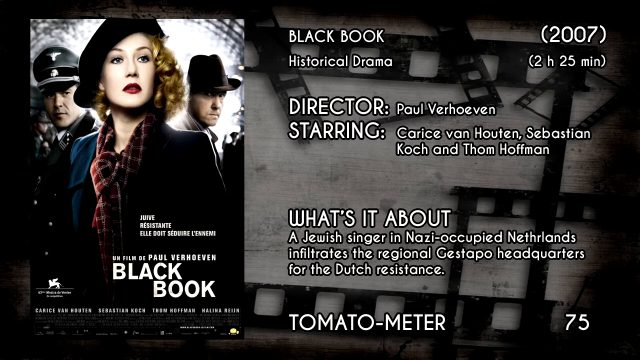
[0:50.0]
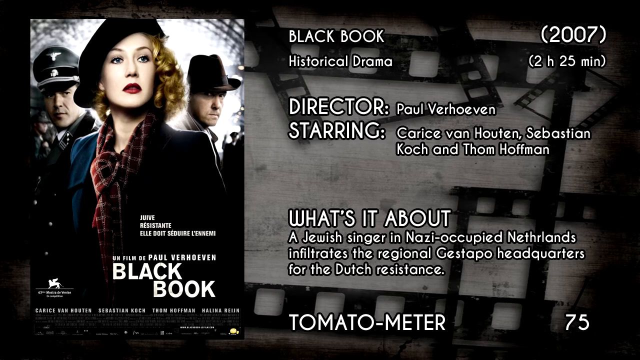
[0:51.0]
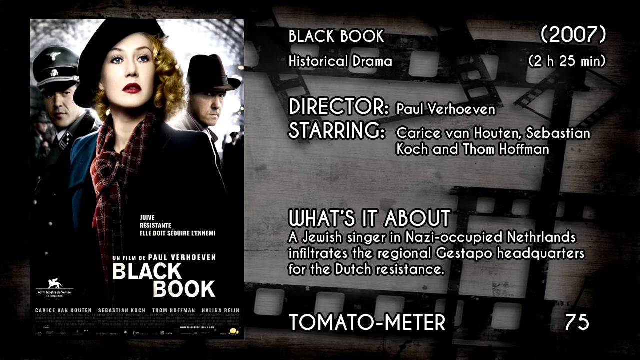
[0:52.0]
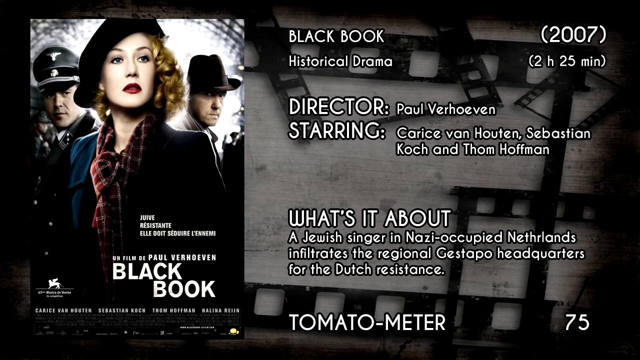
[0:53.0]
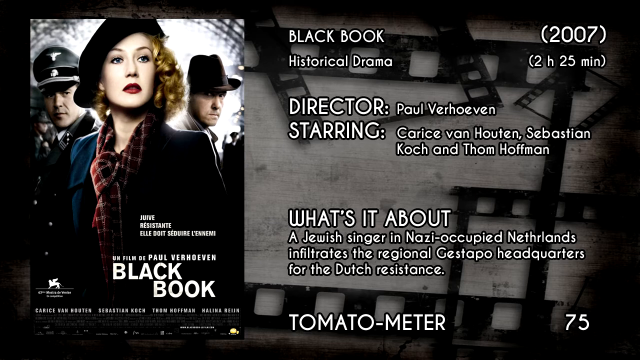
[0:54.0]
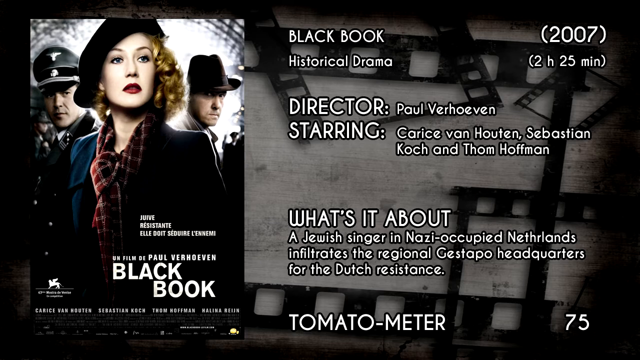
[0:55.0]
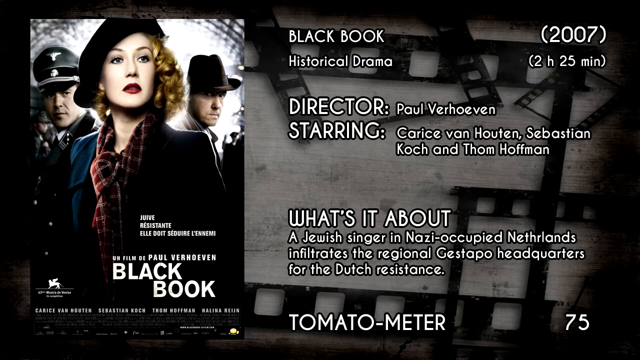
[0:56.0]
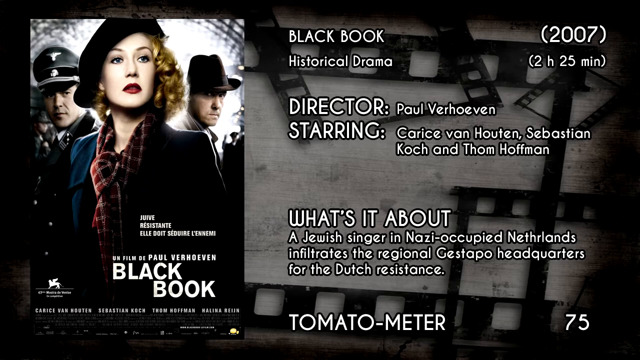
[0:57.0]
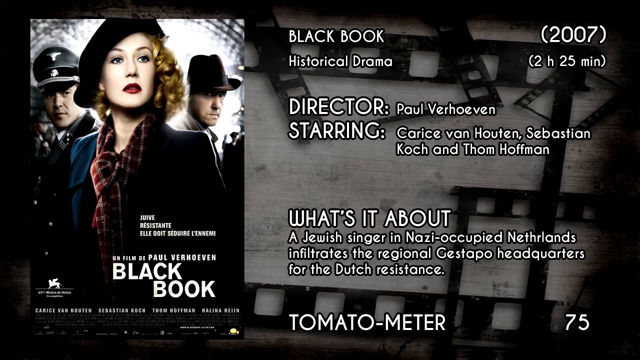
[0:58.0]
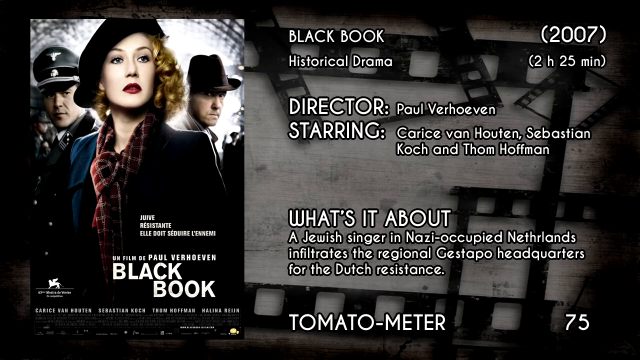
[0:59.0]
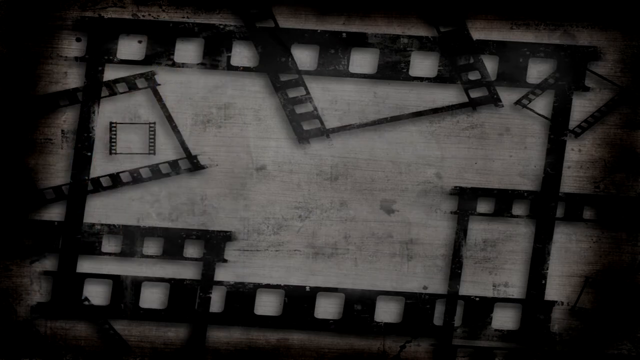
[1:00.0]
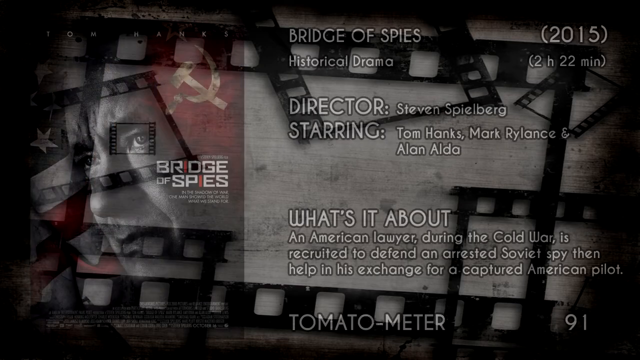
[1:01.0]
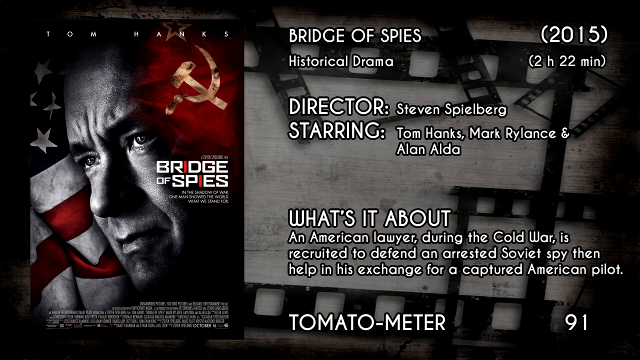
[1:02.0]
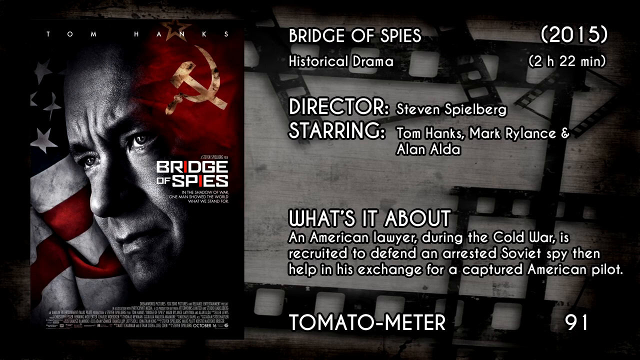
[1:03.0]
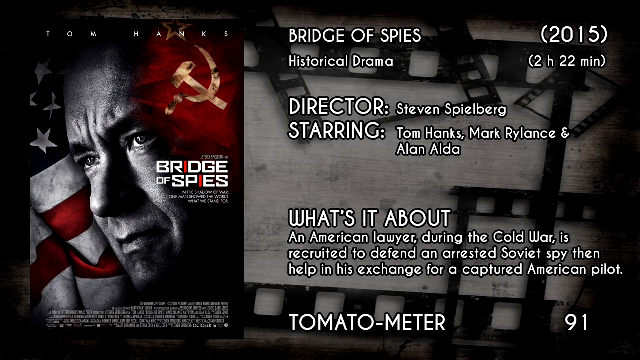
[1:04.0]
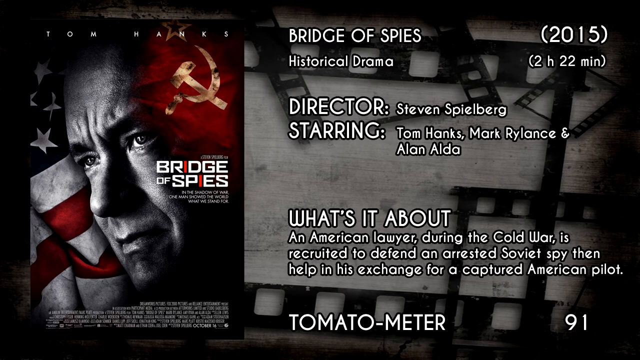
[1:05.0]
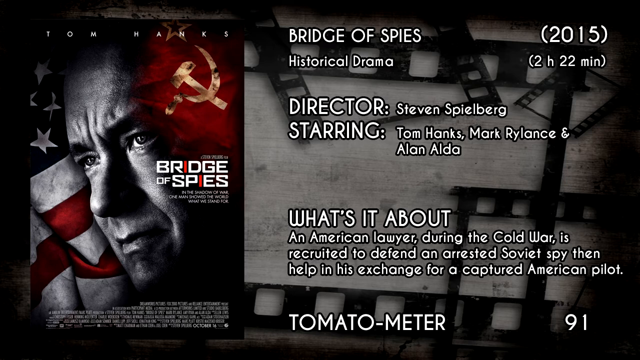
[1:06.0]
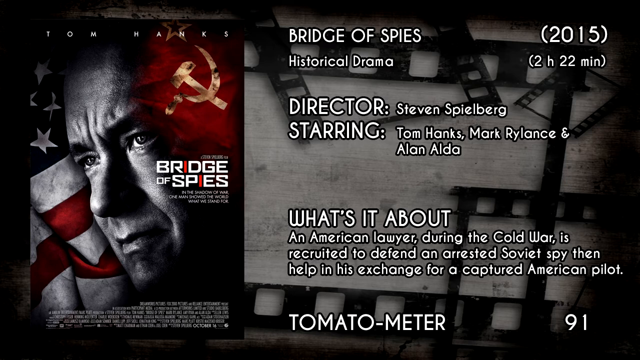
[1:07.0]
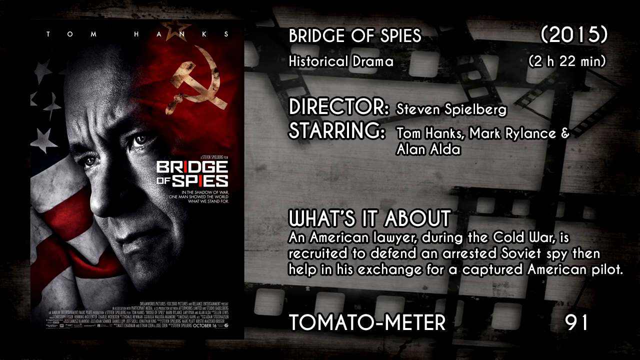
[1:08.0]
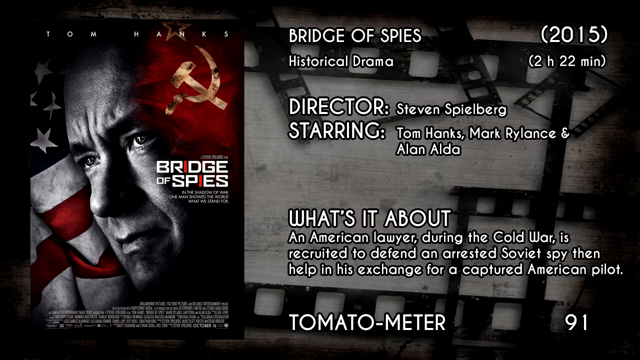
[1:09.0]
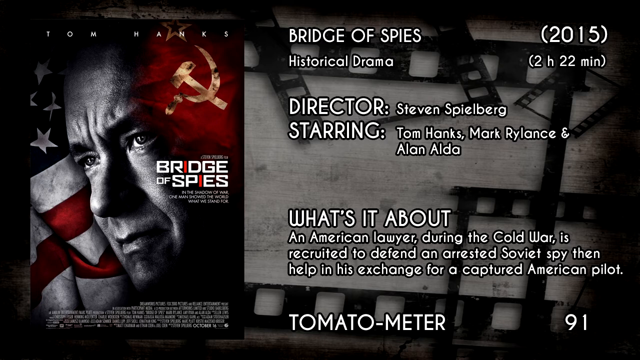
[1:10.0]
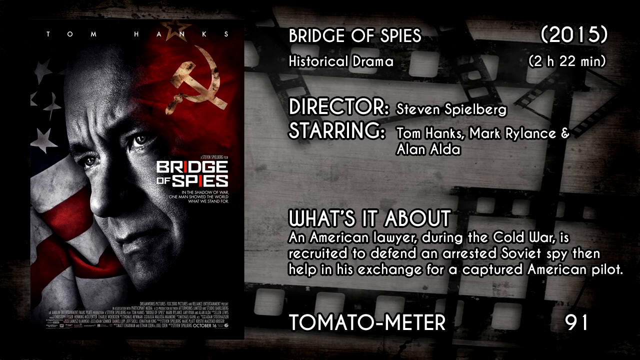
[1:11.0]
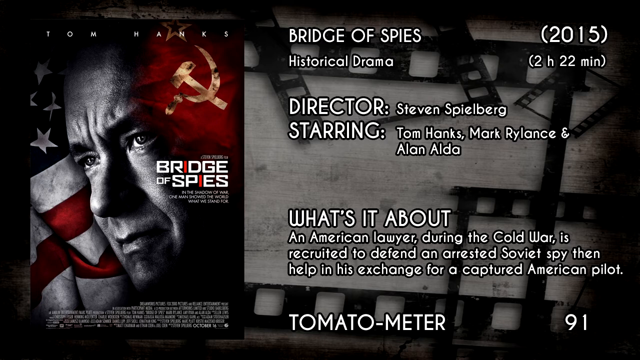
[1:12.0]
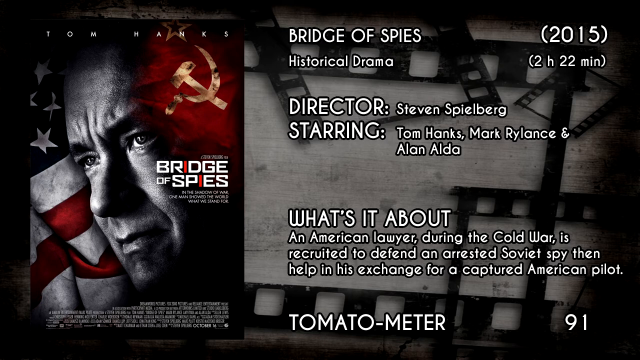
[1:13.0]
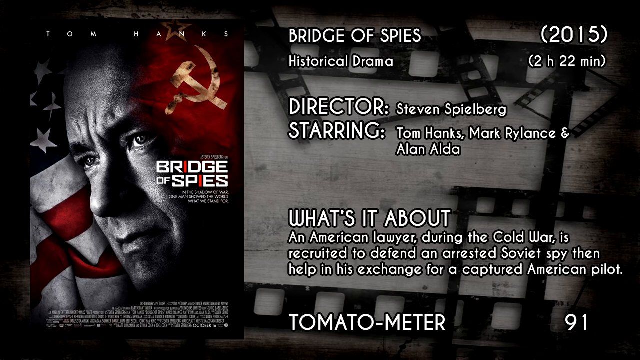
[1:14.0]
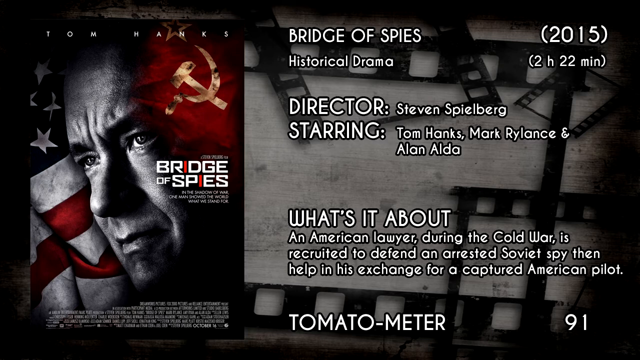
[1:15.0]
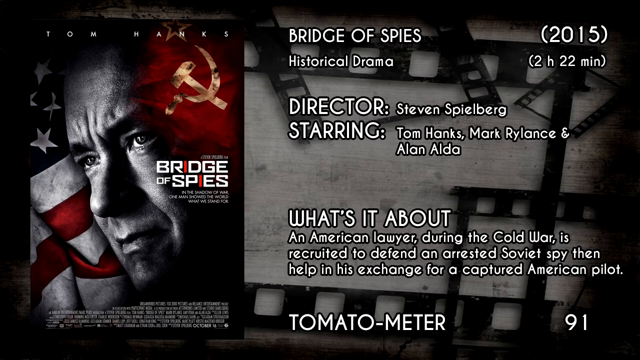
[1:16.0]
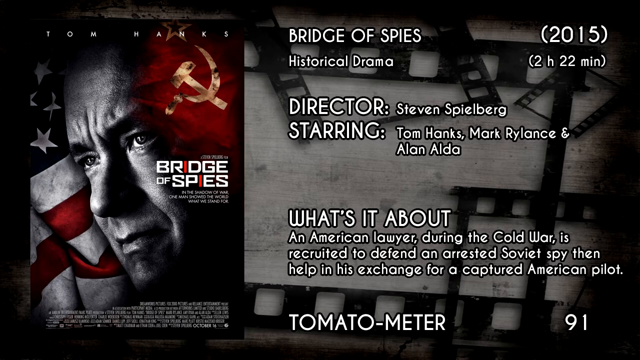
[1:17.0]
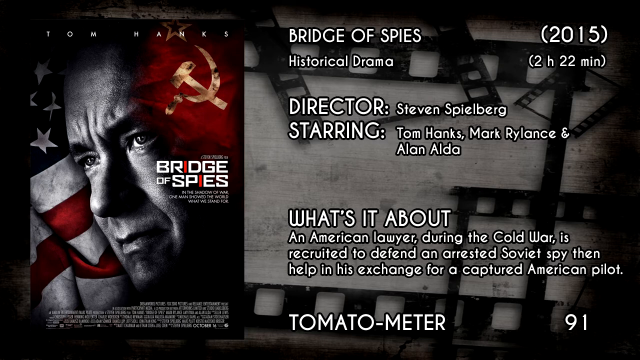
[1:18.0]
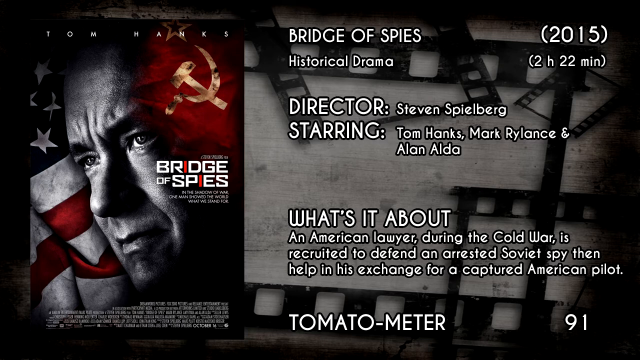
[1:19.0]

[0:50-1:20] The Black Book page stays on screen before moving to a new movie, Bridge of Spies: 2015, historical drama, 2 hours 22 minutes, director Steven Spielberg, starring Tom Hanks, Mark Rylance and Alen Alda. The synopsis describes an American lawyer during the Cold War recruited to defend an arrested Soviet spy and help in his exchange for a captured American pilot. The Tomato Meter rating is 91, a lot higher than the other movies listed. The poster on the left shows Tom Hanks's face with his name at the top, an American flag on the left and a Soviet Union flag on the right.